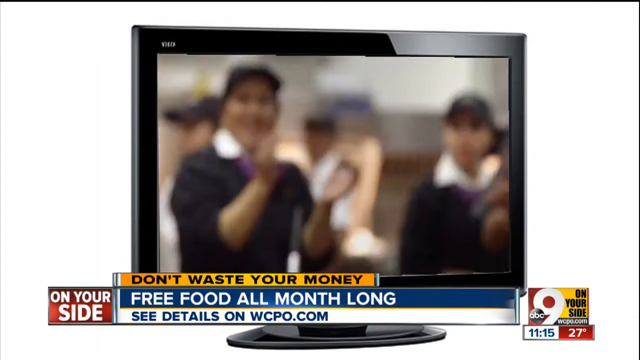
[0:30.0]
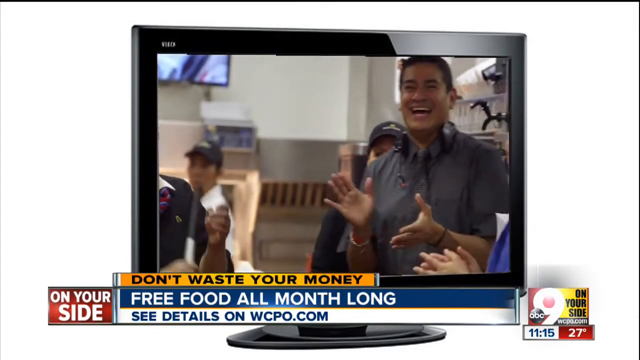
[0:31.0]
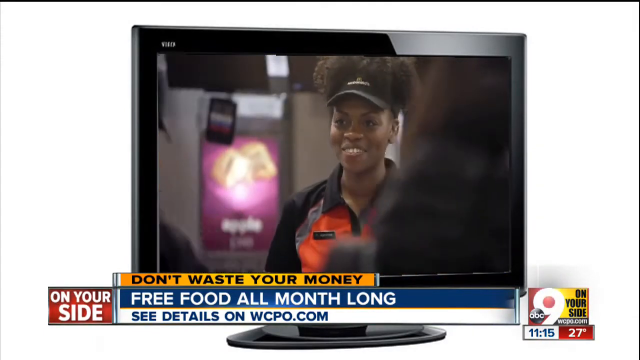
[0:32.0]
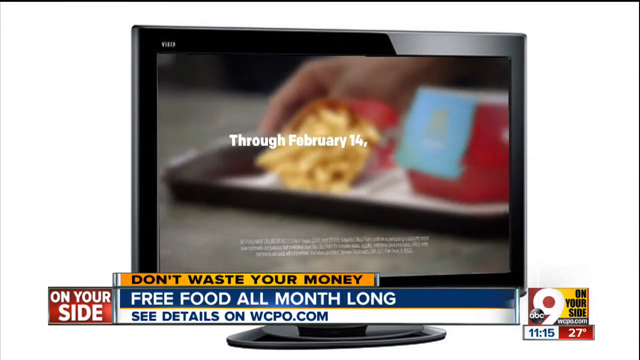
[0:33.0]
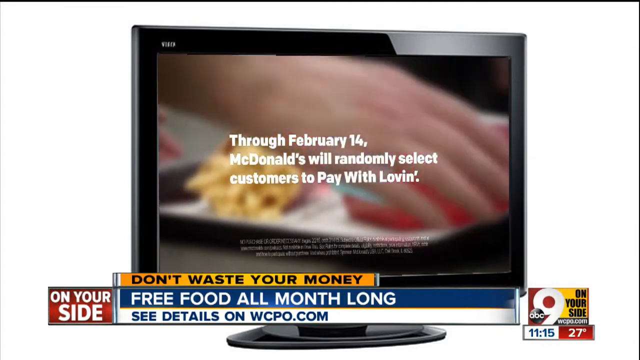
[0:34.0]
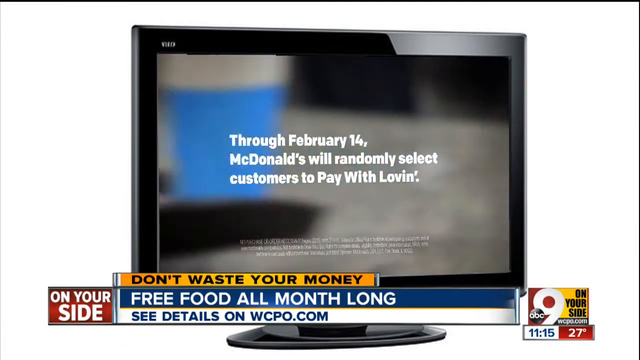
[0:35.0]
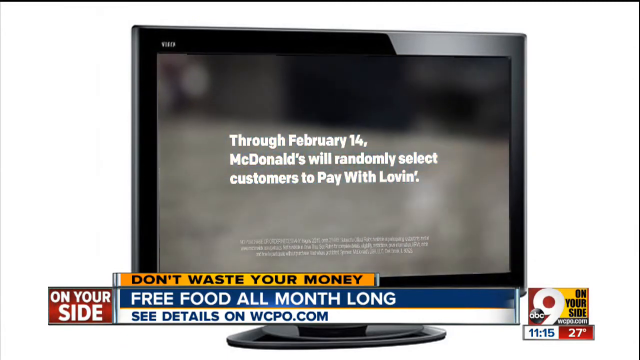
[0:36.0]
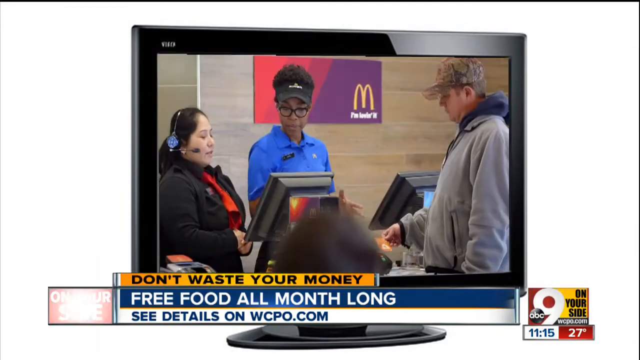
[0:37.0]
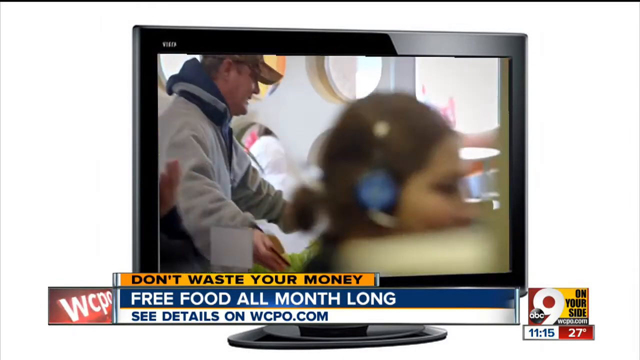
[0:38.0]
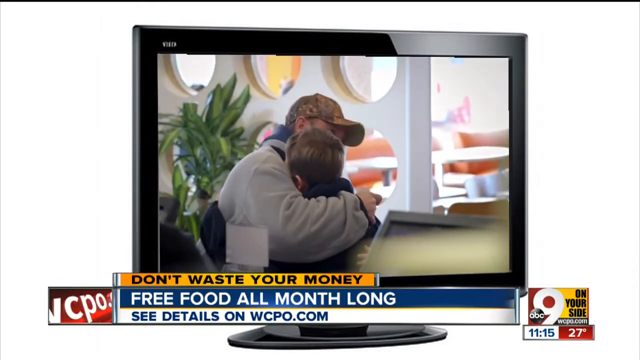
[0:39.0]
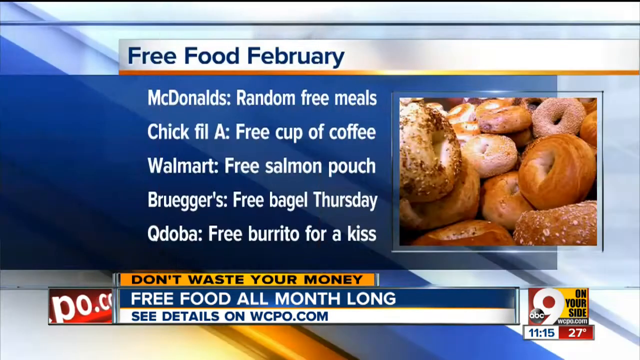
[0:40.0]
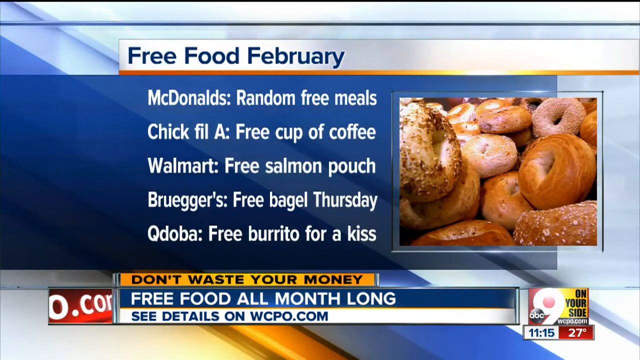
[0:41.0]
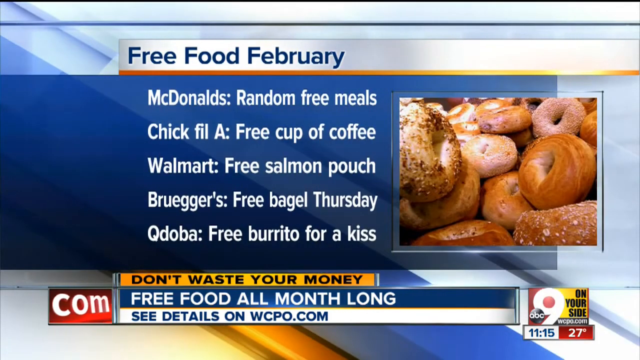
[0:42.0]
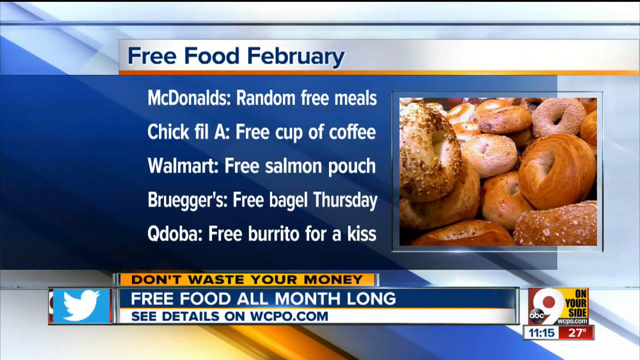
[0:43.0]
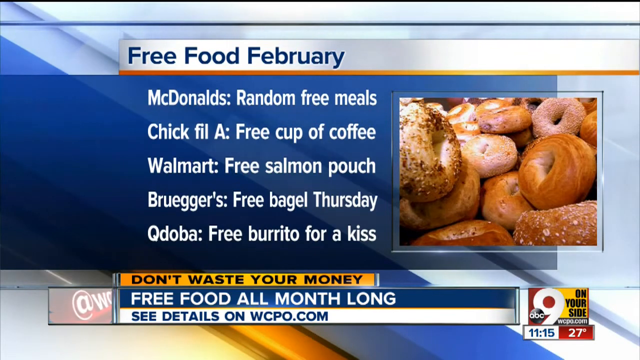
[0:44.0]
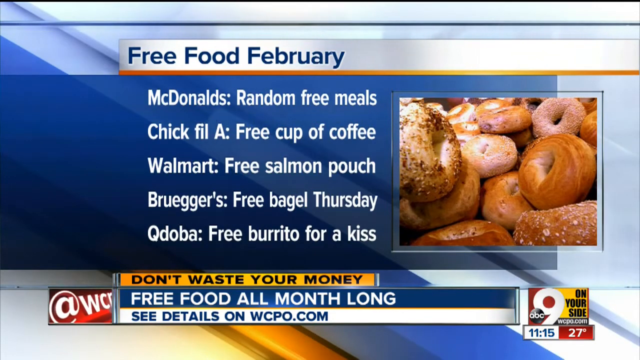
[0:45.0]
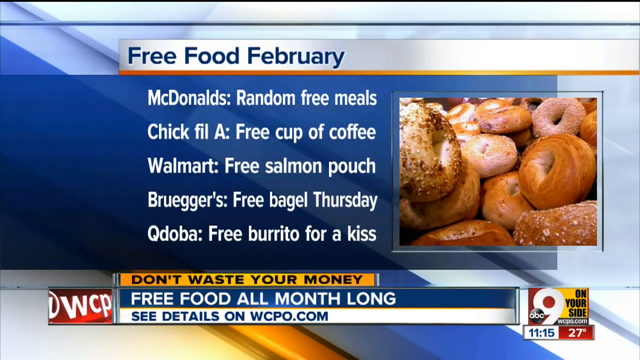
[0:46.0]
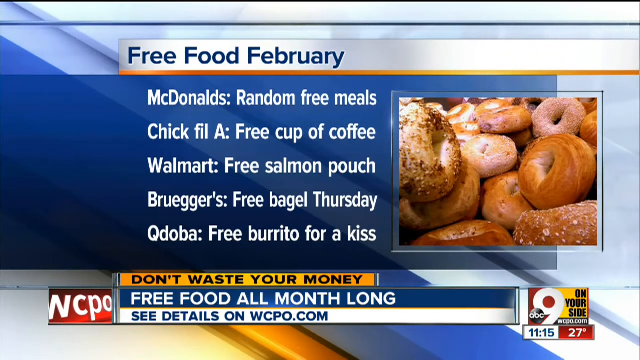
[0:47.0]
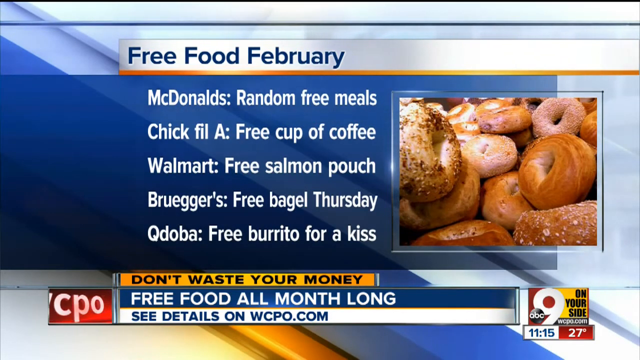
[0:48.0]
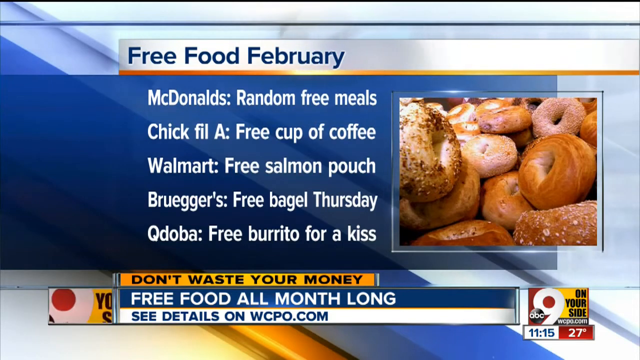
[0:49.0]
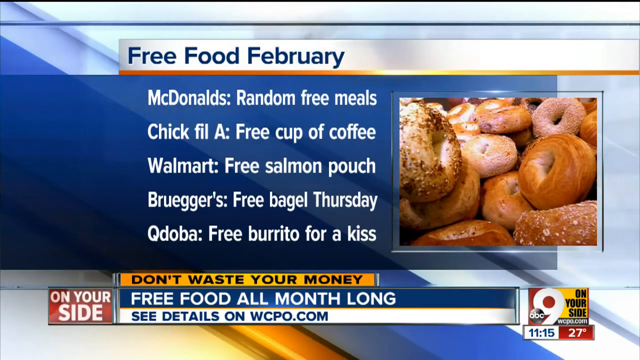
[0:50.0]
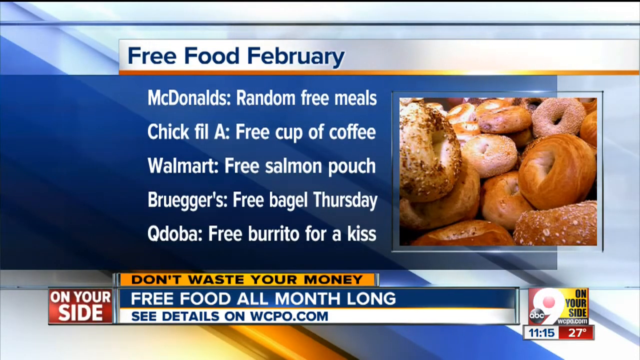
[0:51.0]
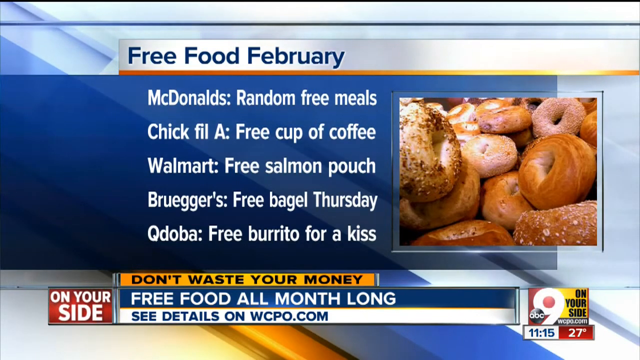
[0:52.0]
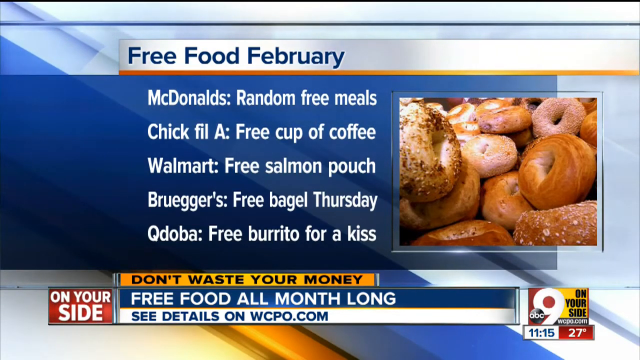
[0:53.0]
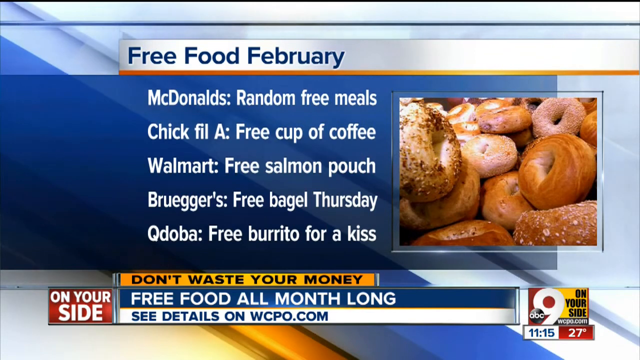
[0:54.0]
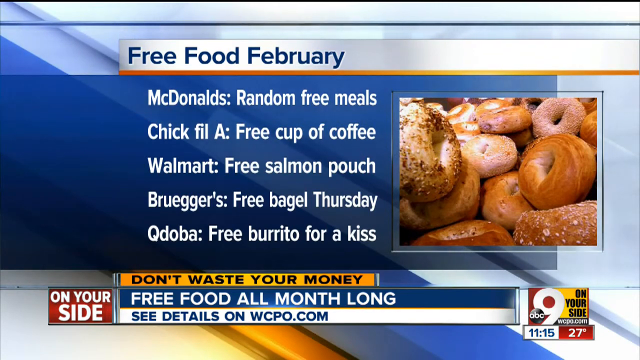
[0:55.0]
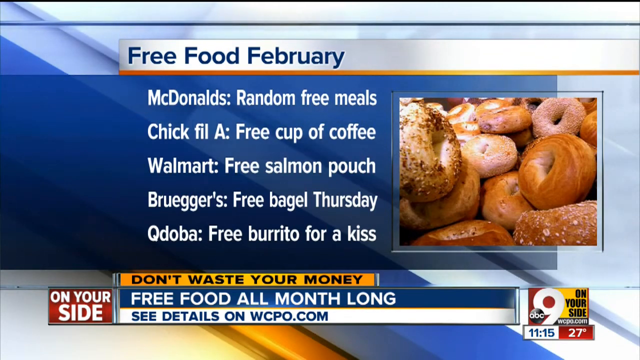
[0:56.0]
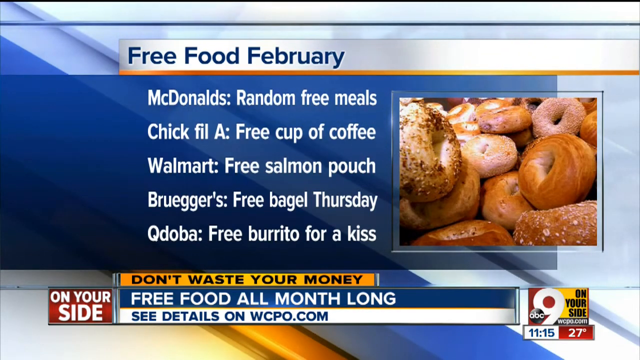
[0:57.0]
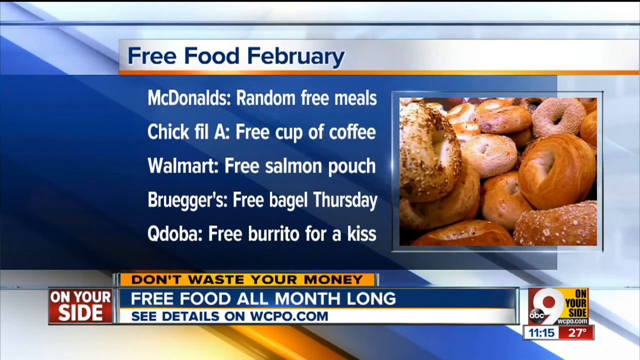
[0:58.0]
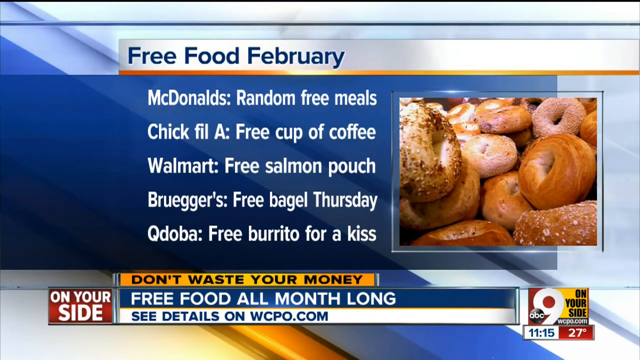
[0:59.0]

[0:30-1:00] Text begins "Through February 14th, McDonald's" and mentions customers paying with "lovin", along with random free meals, a free cup of coffee and free burgers. The advert is about McDonald's, maybe as some sort of promotion.